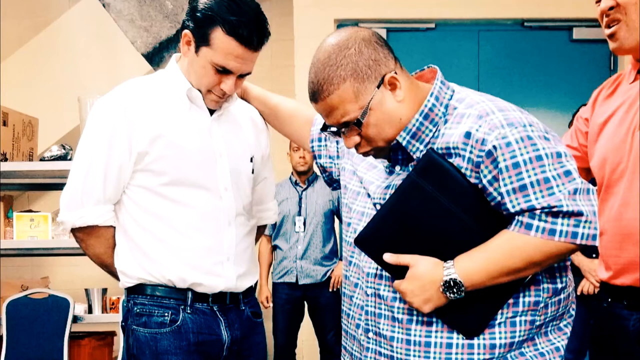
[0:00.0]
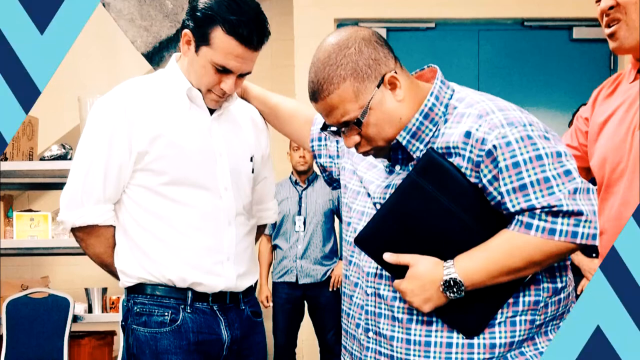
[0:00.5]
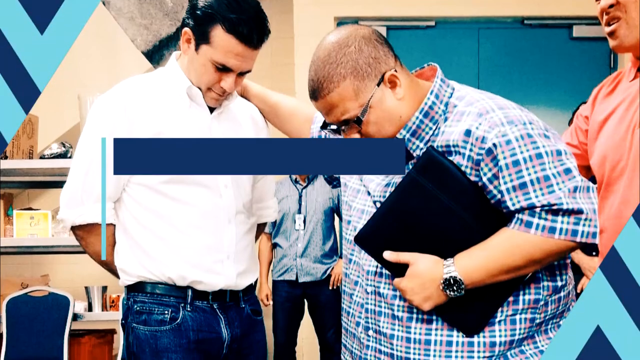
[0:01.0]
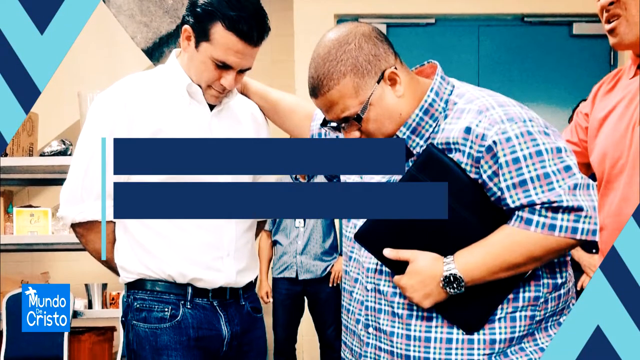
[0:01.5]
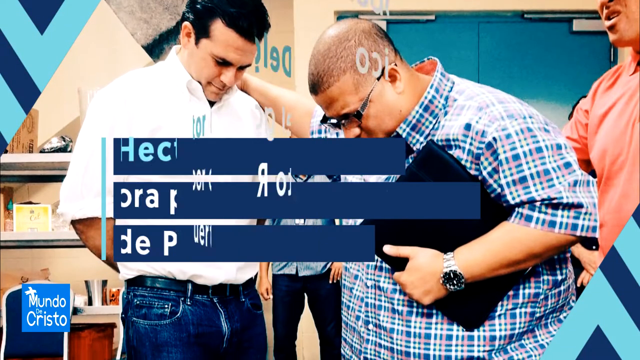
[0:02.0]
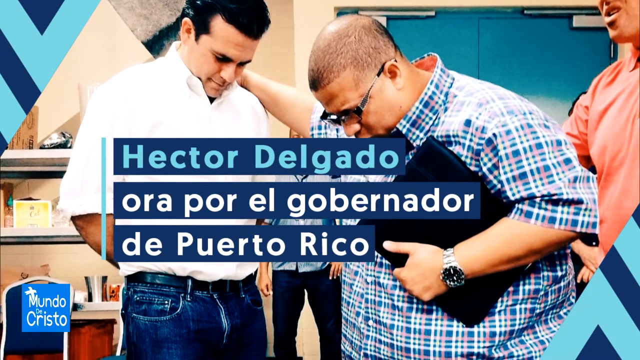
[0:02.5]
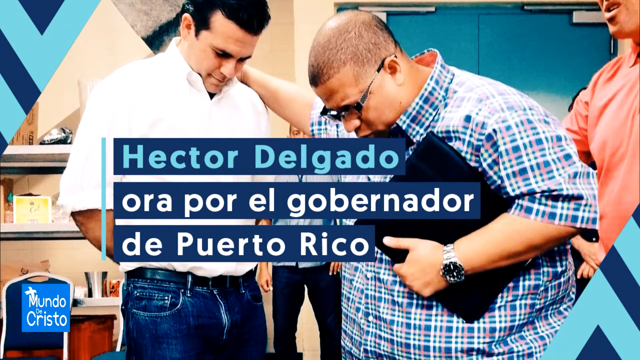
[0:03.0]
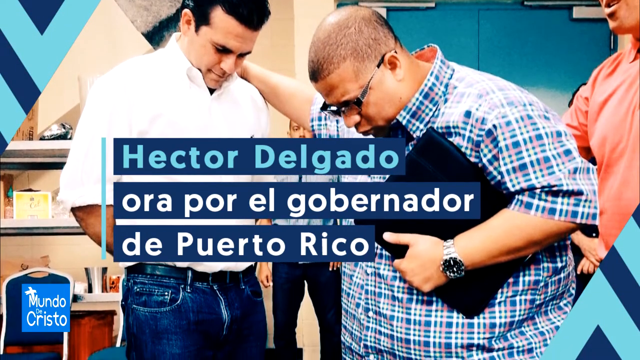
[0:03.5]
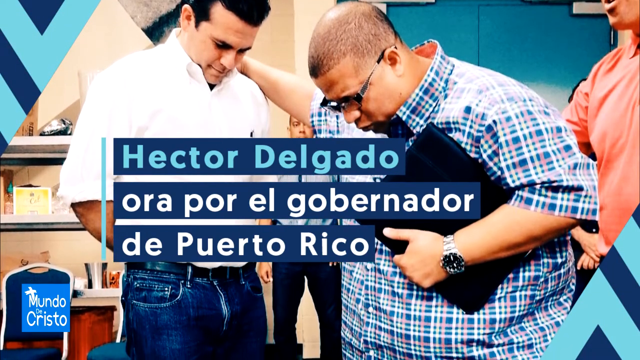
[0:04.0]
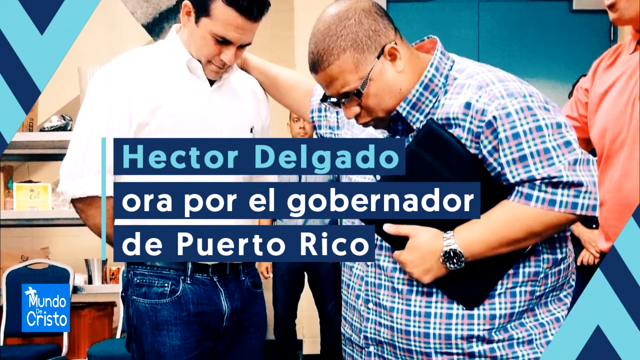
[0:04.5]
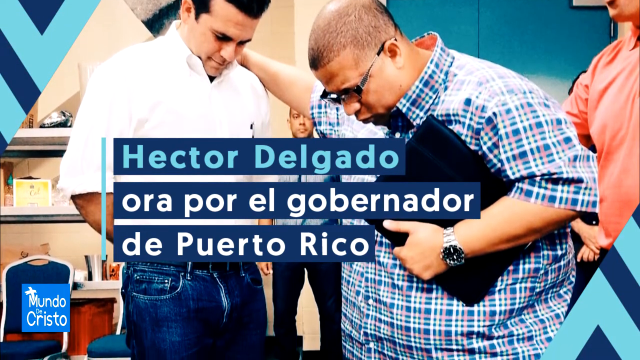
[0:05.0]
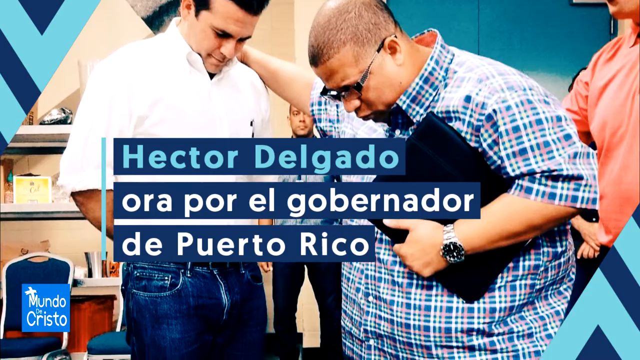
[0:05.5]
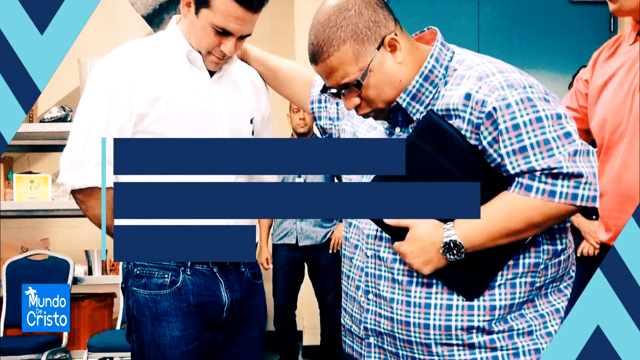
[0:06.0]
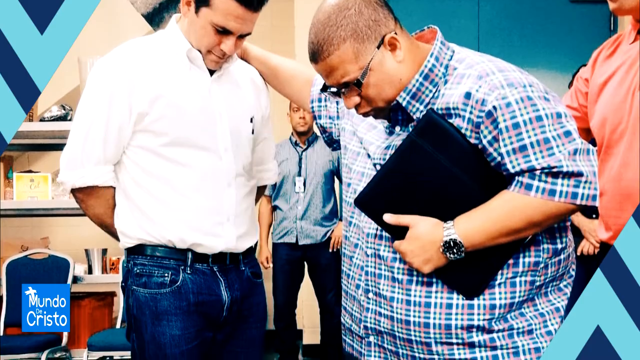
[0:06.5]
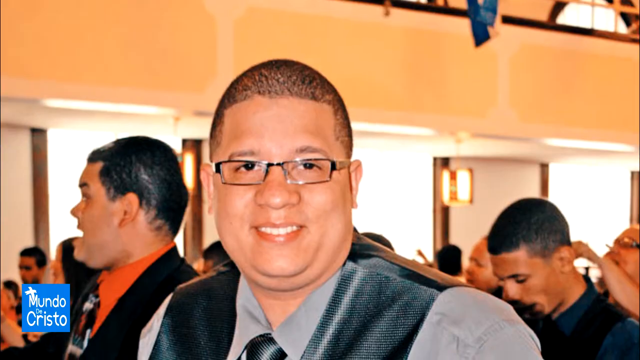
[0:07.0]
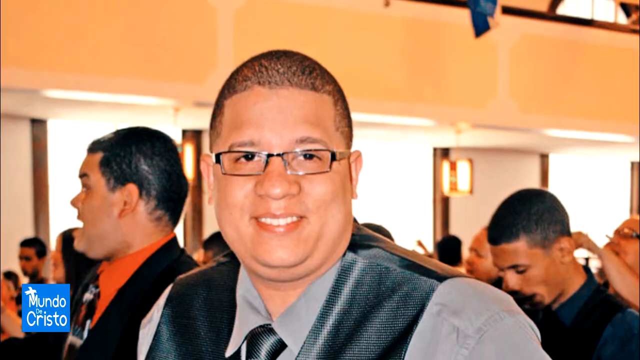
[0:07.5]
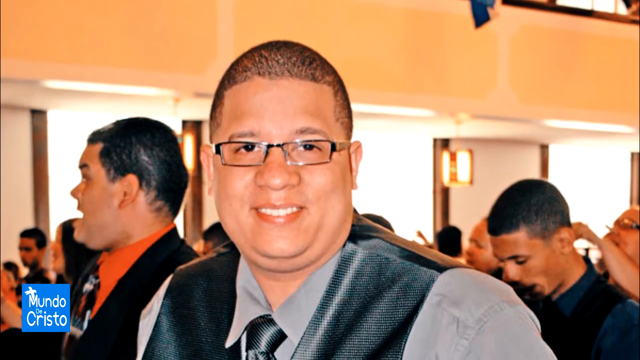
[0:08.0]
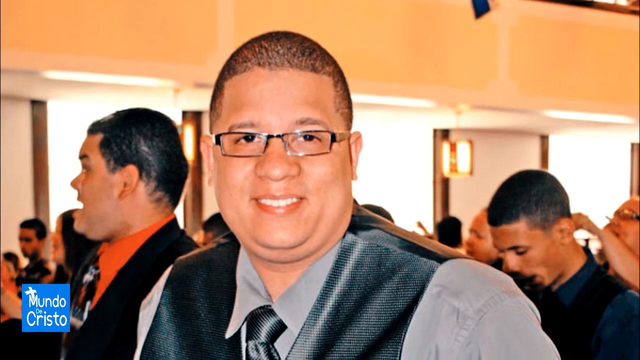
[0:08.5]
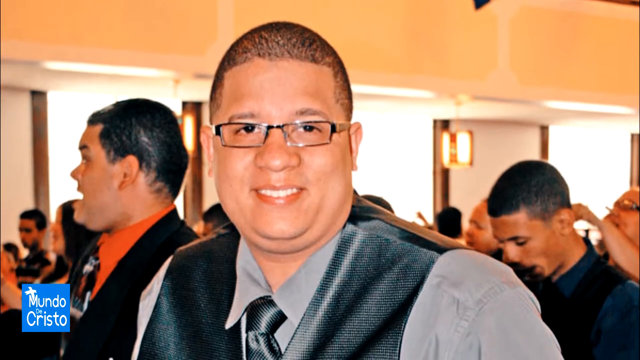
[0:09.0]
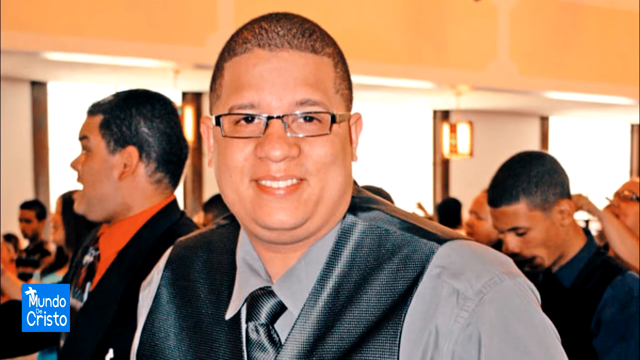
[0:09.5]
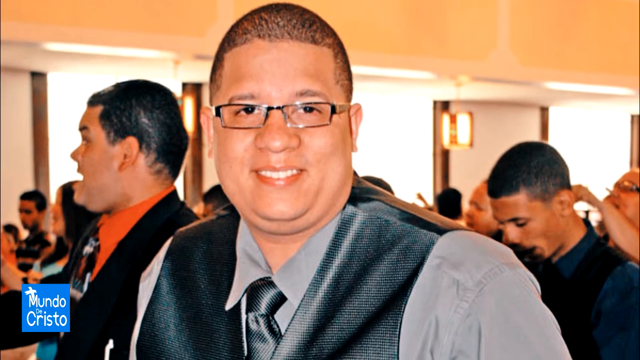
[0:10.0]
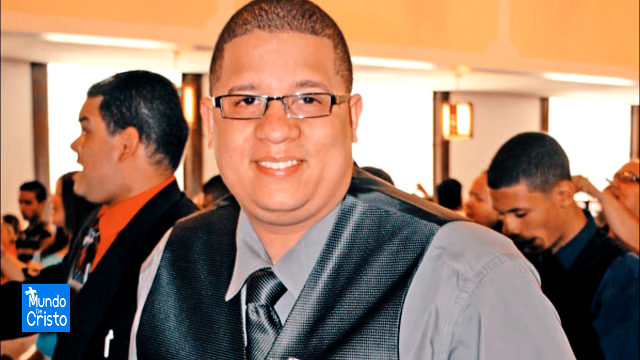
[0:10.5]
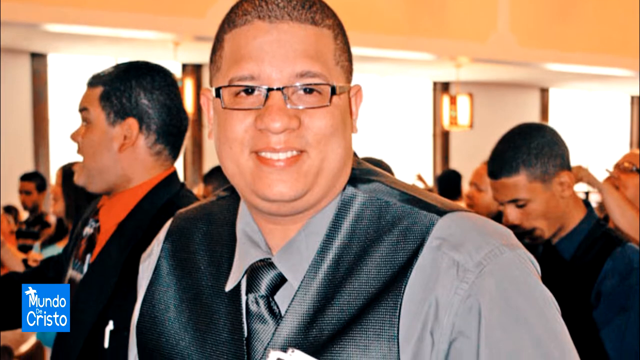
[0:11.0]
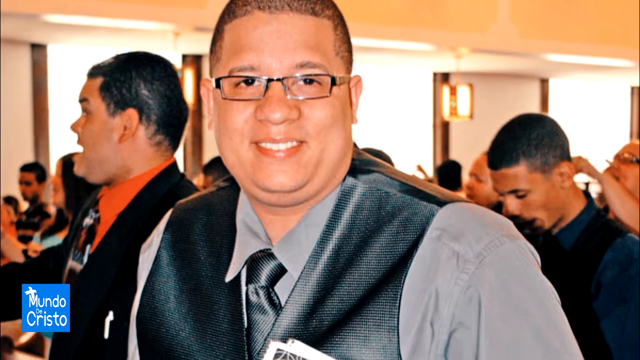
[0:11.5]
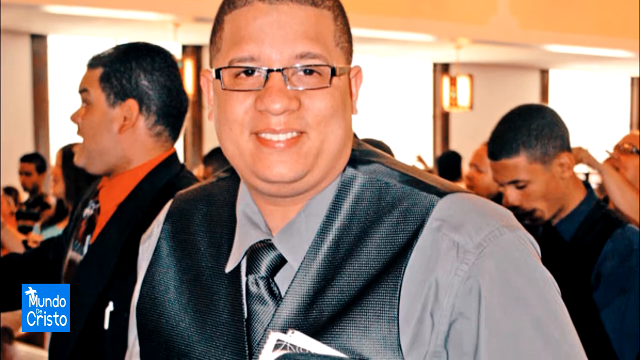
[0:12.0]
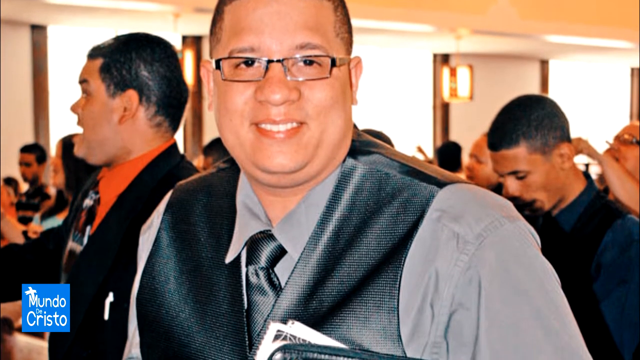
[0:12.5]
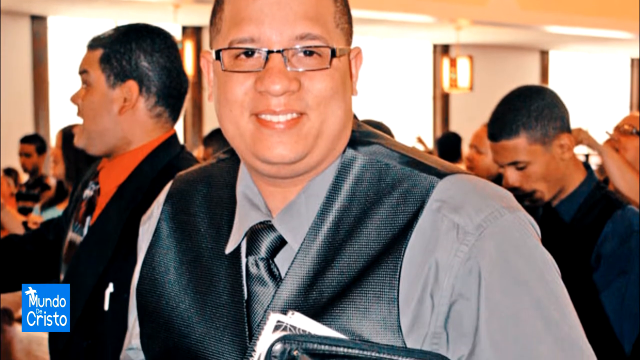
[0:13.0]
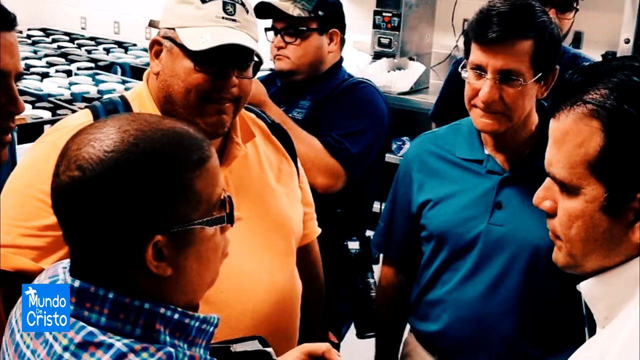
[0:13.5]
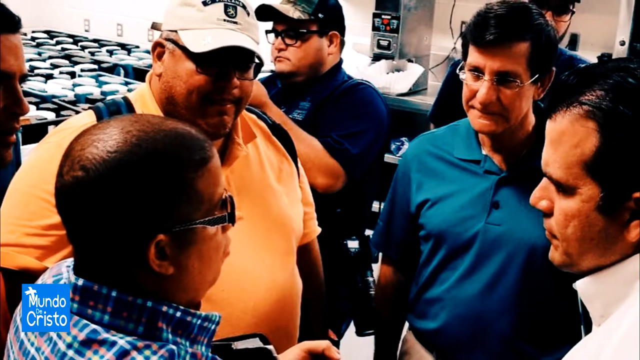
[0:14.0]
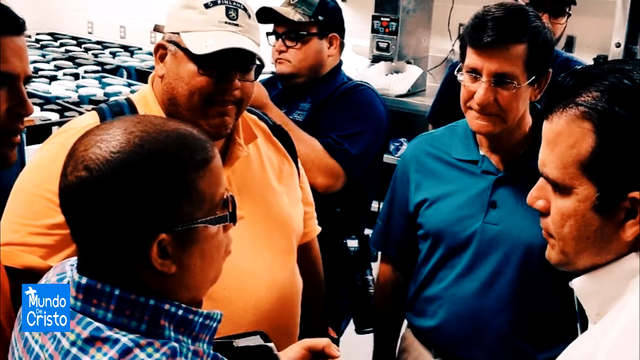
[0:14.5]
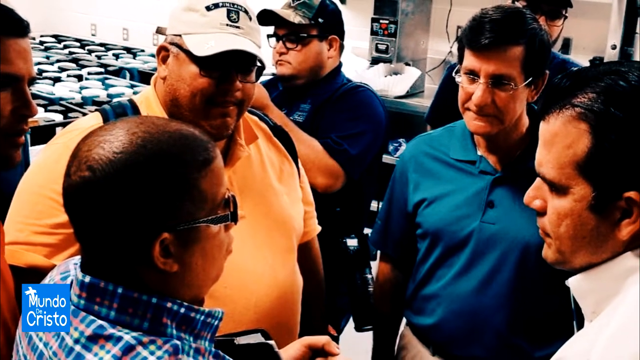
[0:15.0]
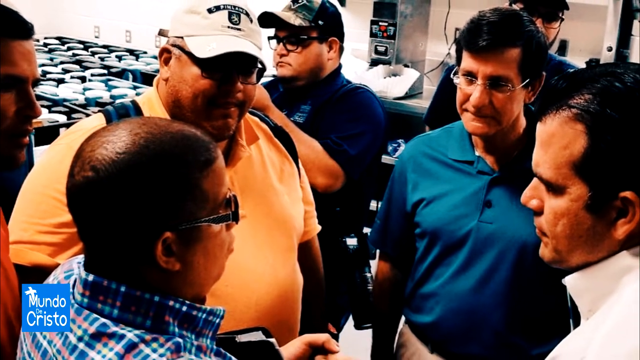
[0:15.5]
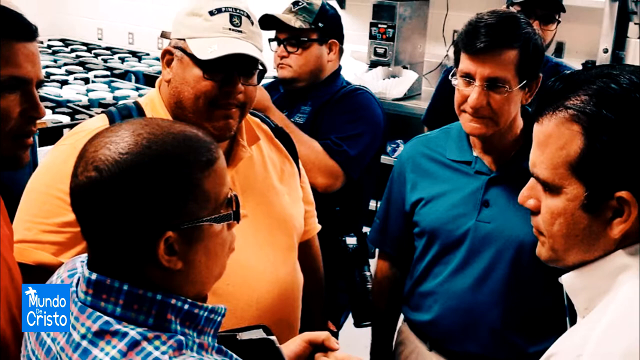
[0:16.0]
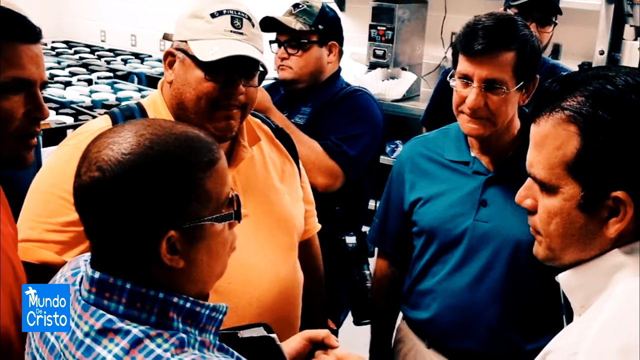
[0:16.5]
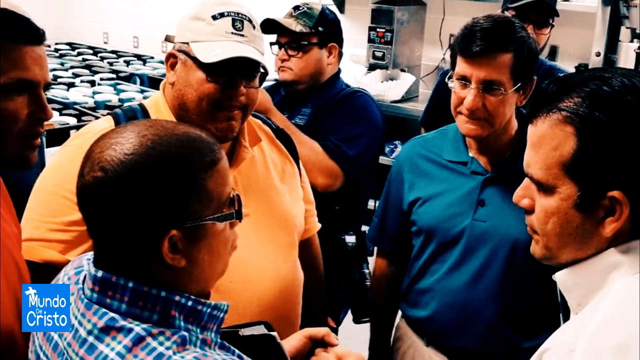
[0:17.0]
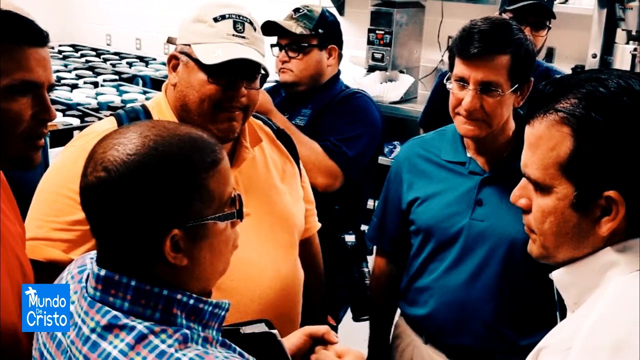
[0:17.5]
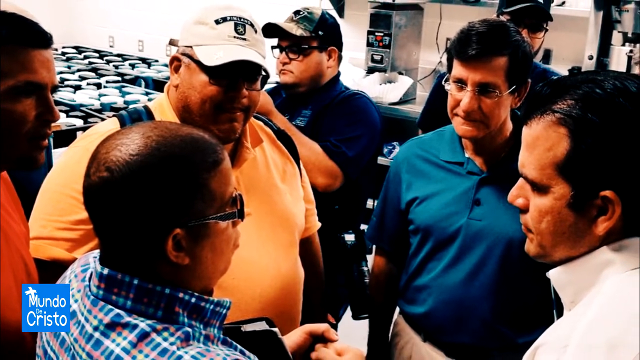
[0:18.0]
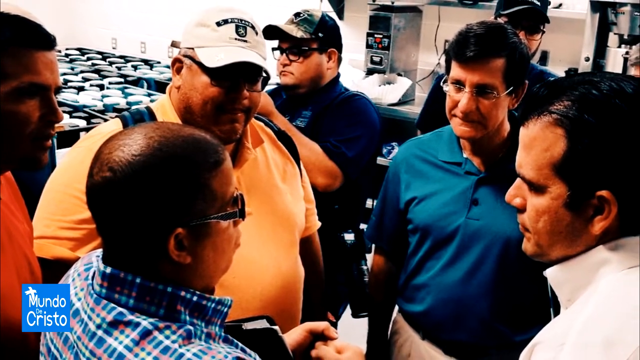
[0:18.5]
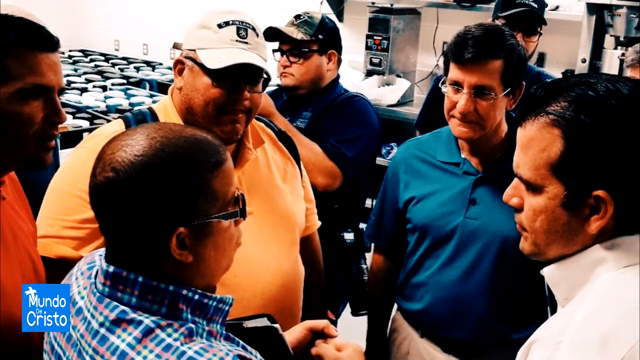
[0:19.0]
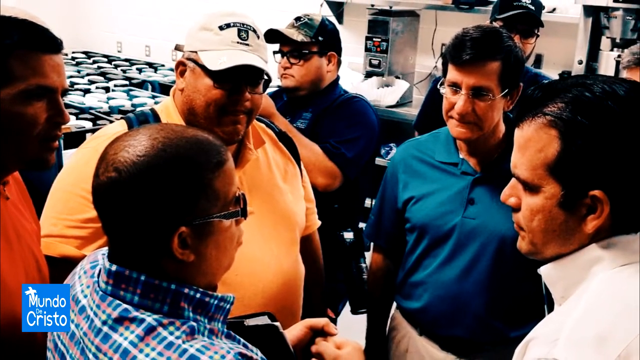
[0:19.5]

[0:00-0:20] A few men are in a room with a turquoise double door behind them. In the forefront is a man holding a black book; he wears a blue and white checkered striped shirt and has a shaved head and glasses. To his right is a man with black hair in a white shirt, jeans and a black belt. The man in the white shirt has his hands clasped behind his back, and the man in the blue shirt, to his left, has his right hand over the white-shirted man's shoulder. Both are bowing their heads in what looks to be prayer. Graphics pop up on the scene, and words appear in the middle of the screen, beginning "Hector Delgado" and ending "El Gobernador de Puerto Rico." The camera pans down a bit and then flashes to a new scene showing the same man with the shaved head and glasses, now wearing a suit with a grey vest, a grey tie and shirt, with various people behind him. It then pans to a new scene of several men huddled in a circle as the same shaved-head man speaks and the men listen intently.